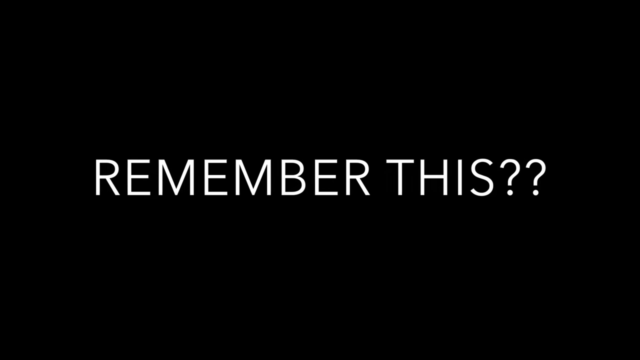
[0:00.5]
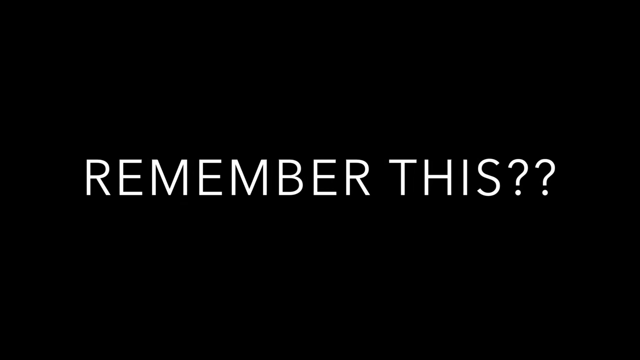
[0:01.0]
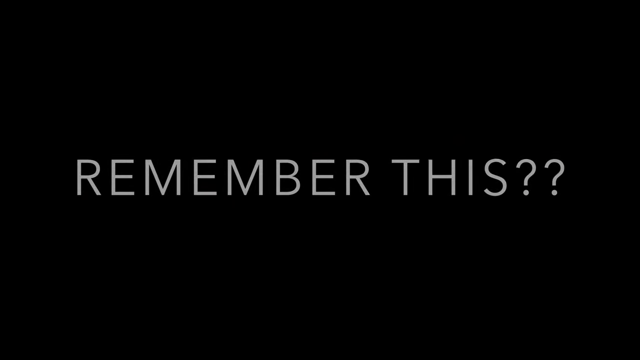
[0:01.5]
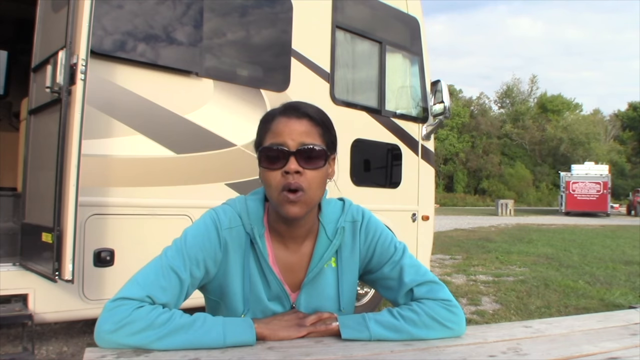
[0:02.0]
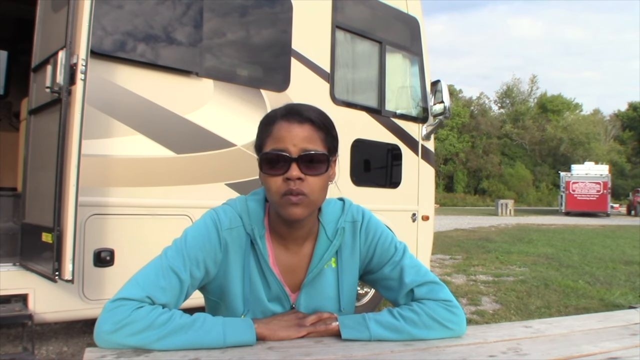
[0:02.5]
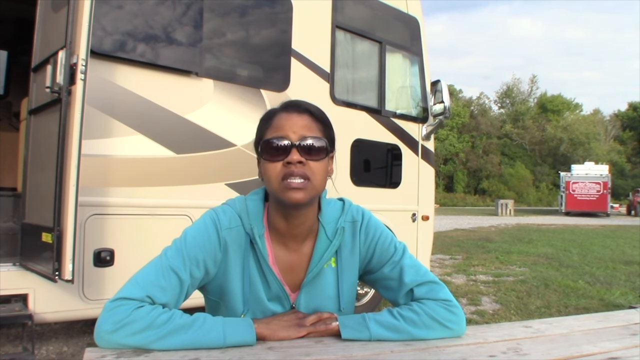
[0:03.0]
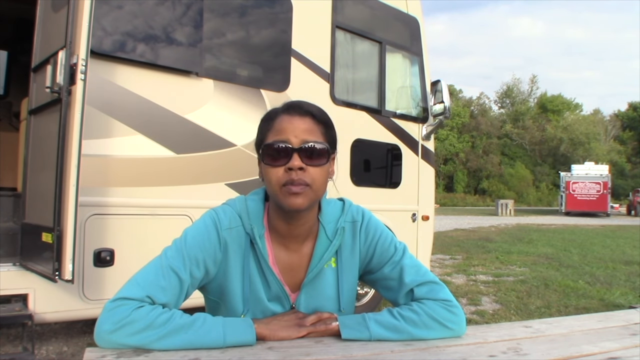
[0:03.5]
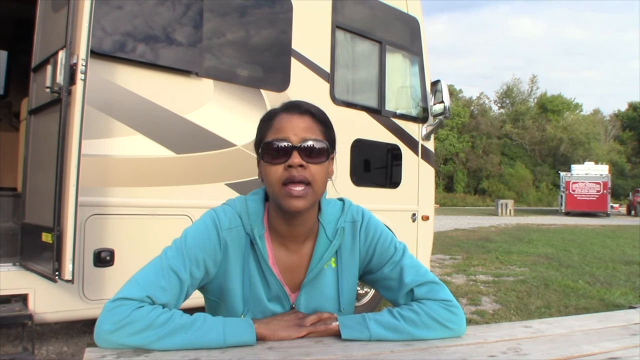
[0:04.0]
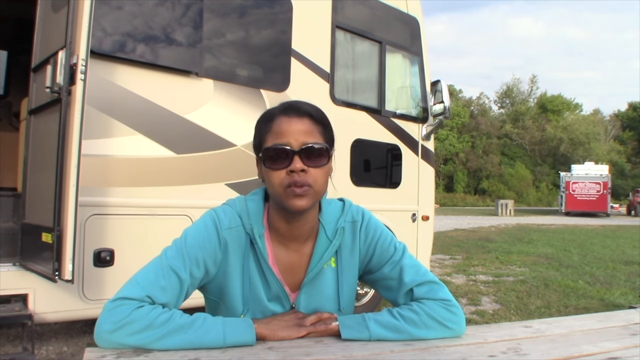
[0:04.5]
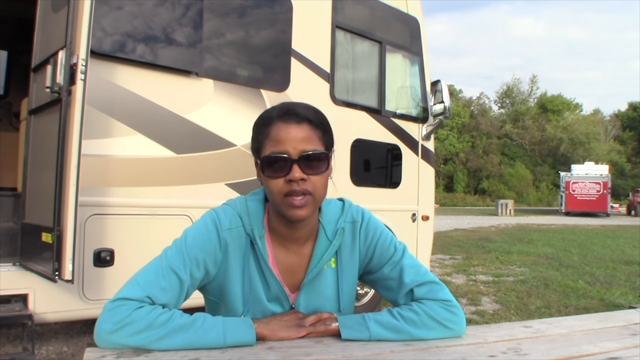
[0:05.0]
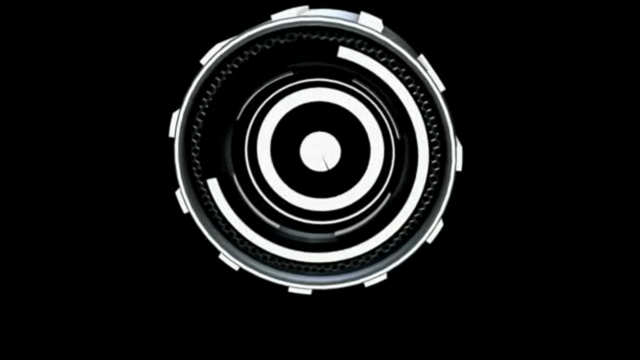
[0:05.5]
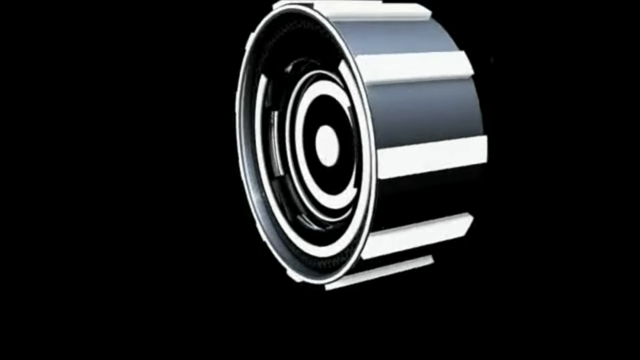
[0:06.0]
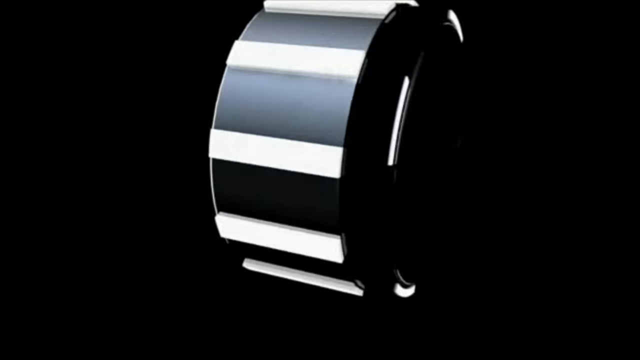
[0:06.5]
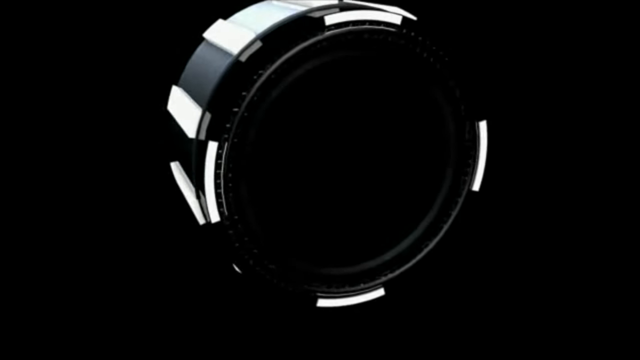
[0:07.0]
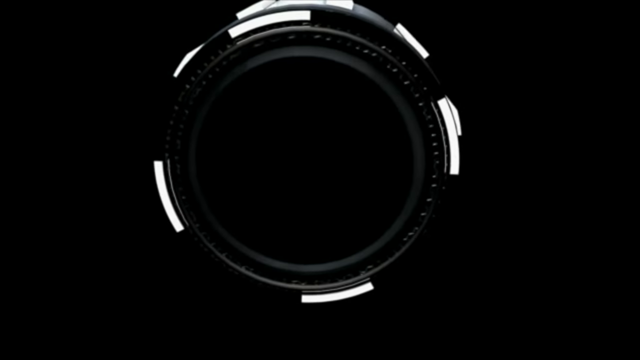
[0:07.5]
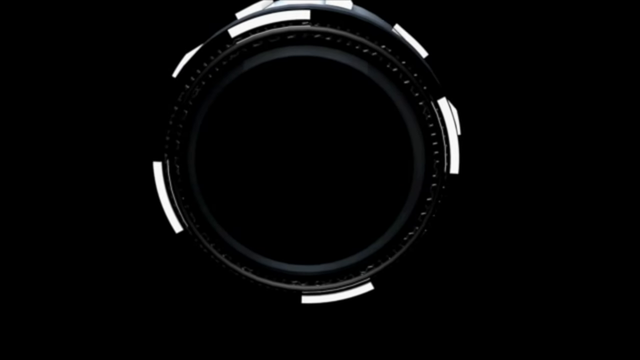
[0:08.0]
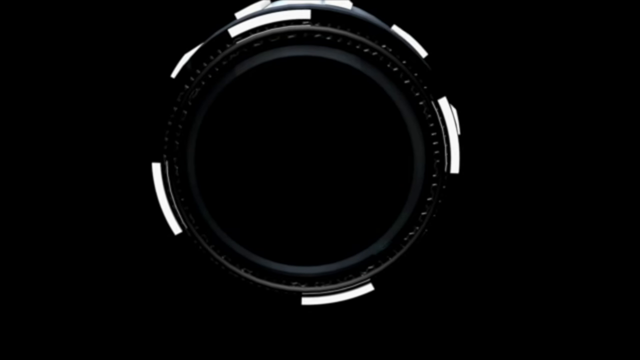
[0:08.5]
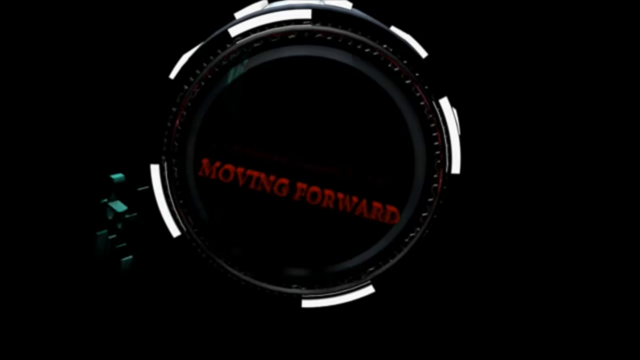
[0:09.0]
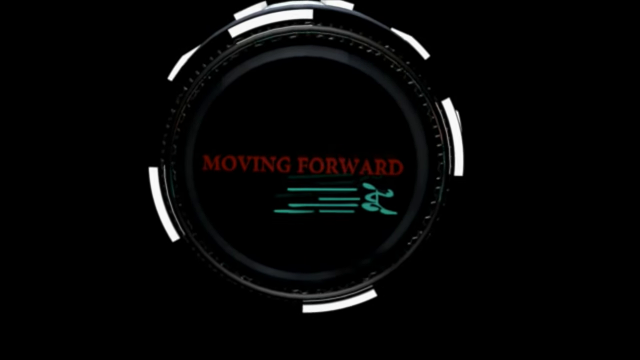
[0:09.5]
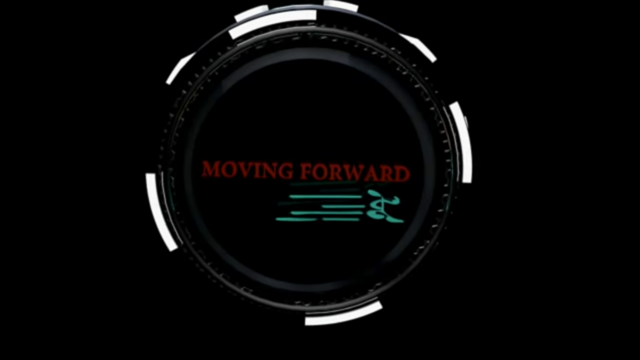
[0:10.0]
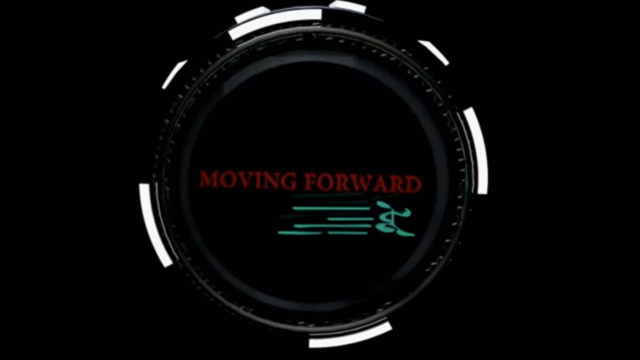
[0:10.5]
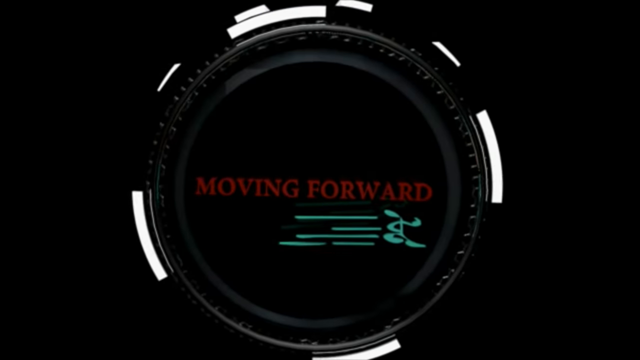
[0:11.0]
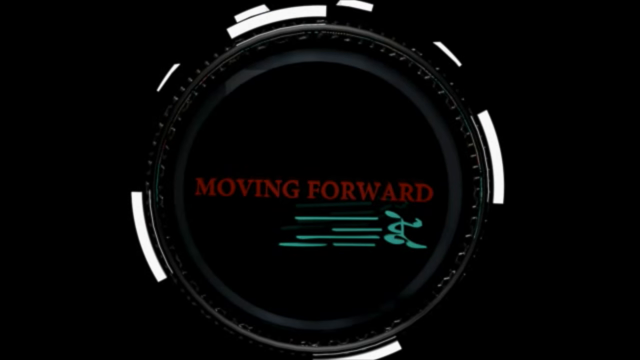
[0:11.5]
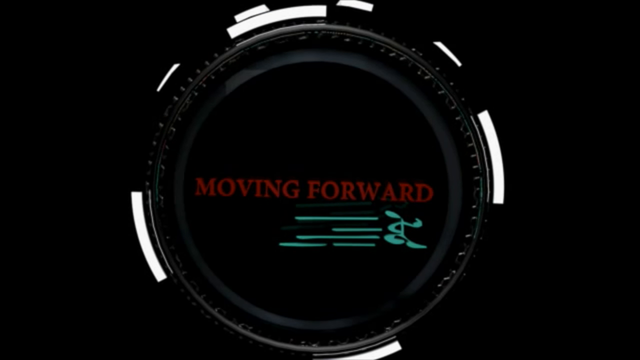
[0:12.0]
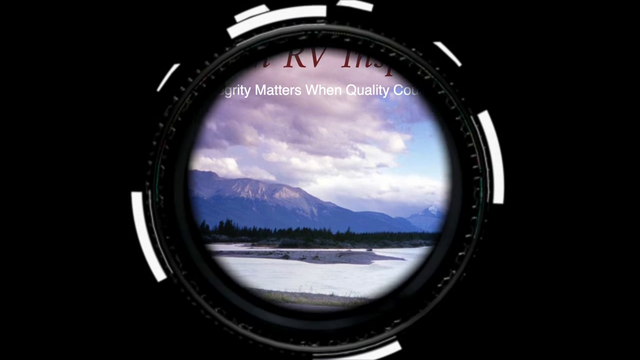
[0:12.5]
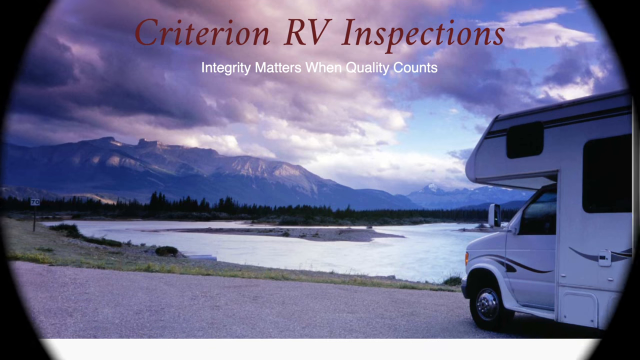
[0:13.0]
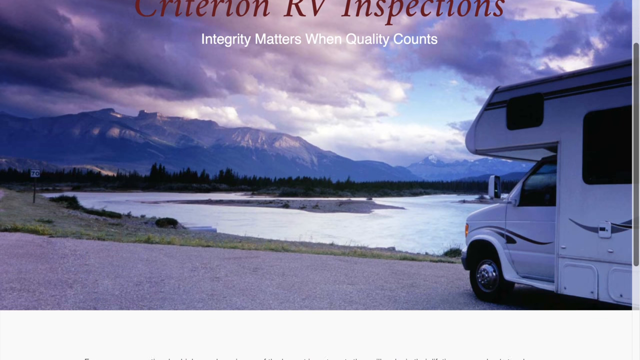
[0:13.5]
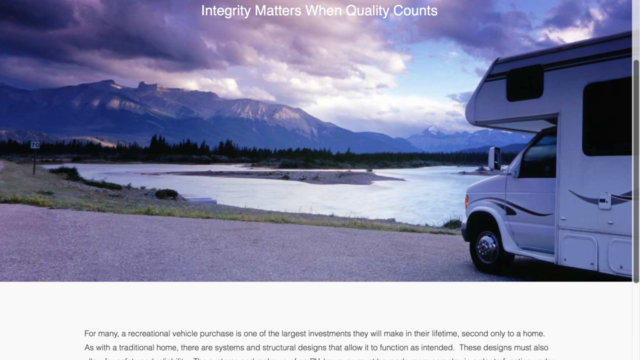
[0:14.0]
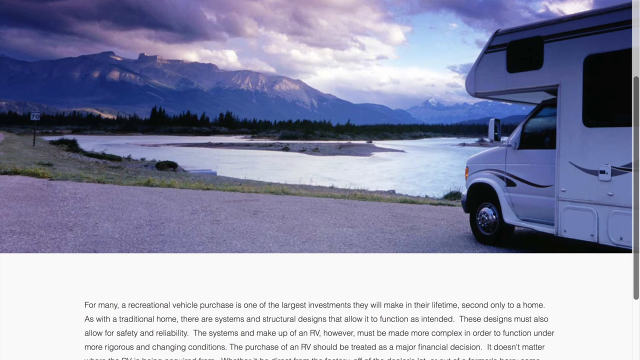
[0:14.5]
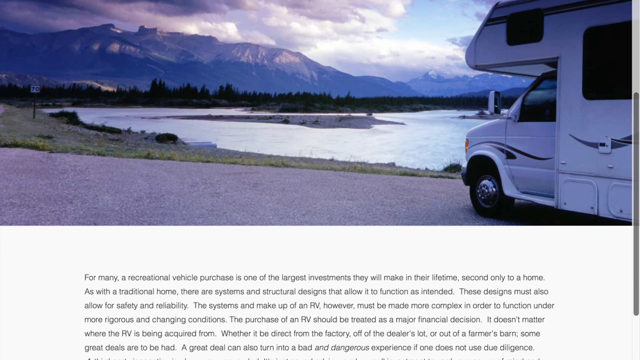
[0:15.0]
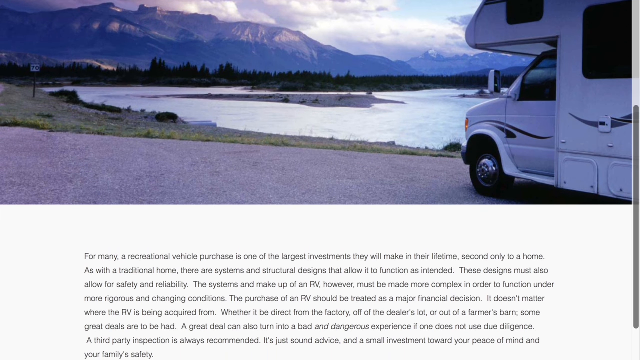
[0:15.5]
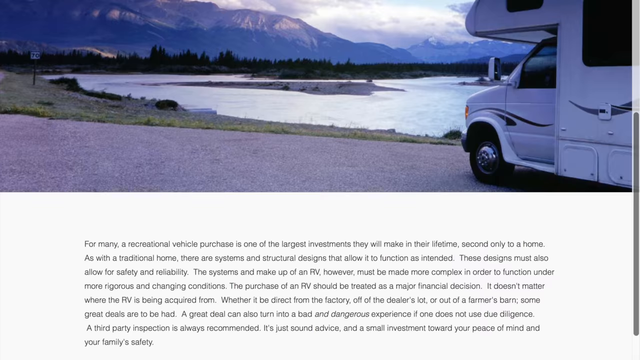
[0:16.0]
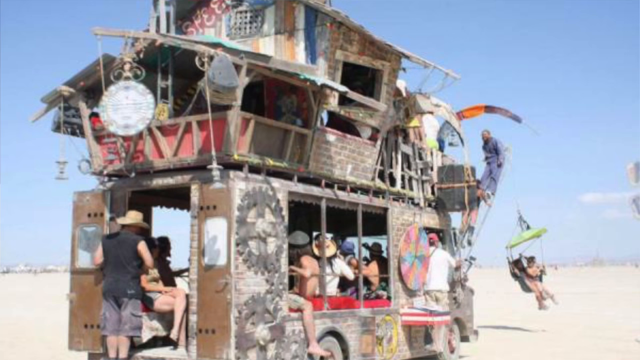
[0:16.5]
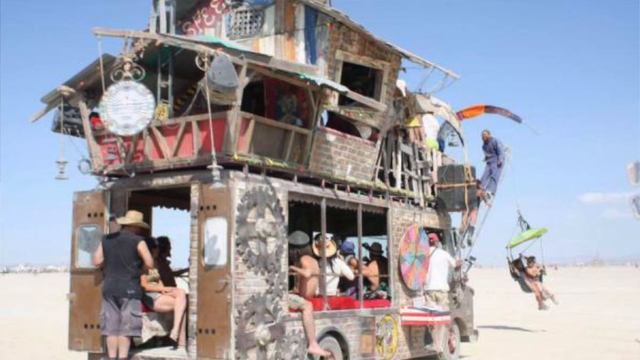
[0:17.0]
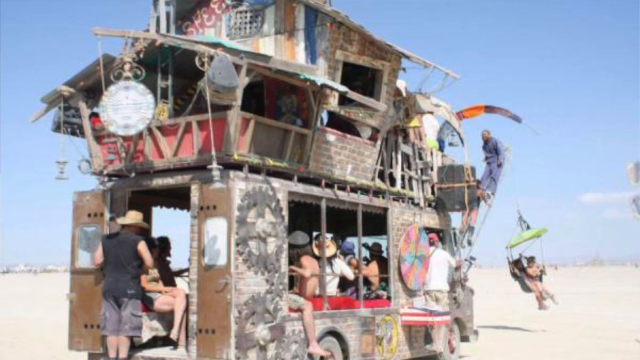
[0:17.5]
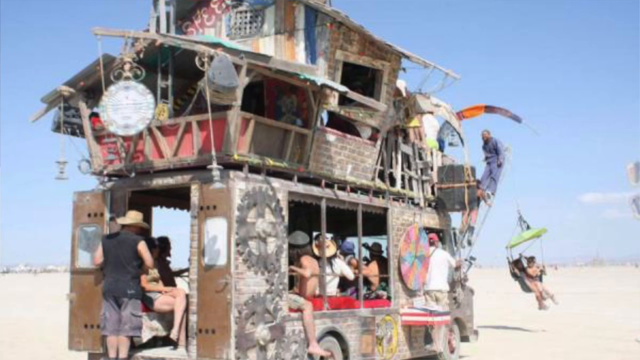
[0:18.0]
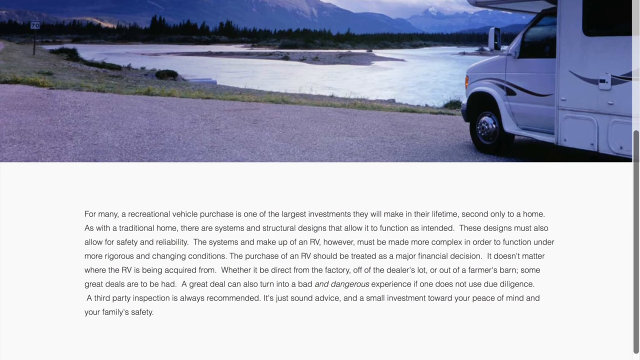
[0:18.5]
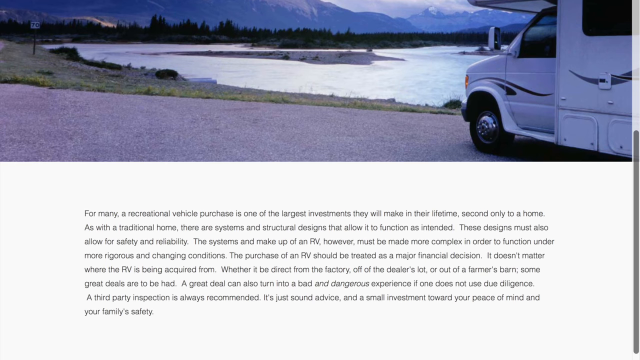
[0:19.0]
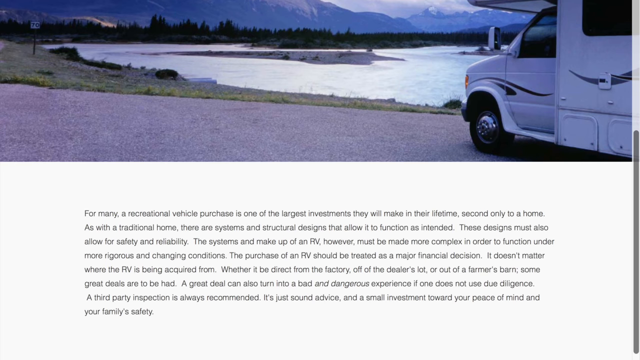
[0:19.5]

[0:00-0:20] Text appears at the very beginning reading "REMEMBER THIS??" in all caps, with two question marks. It quickly jumps to a lady sitting outside on a bench in front of a big RV. The RV is beige with what look like dark brown stripes as well as some beige stripes, and she sits on the bench talking directly at the viewer. Next comes a 3D animation of what appear to be checkers folded on top of each other, with "moving forward" on it in red text. A website then appears with a picture of an RV and a lot of text, basically an article. Another picture shows a traveling, tourist-type vehicle with a bunch of stuff stacked on top of it; it even looks like there is a whole little small house on top of it.